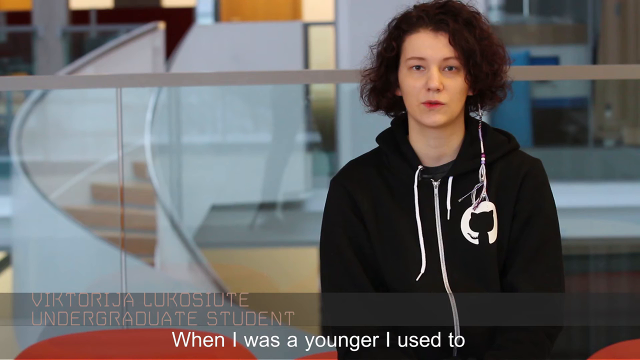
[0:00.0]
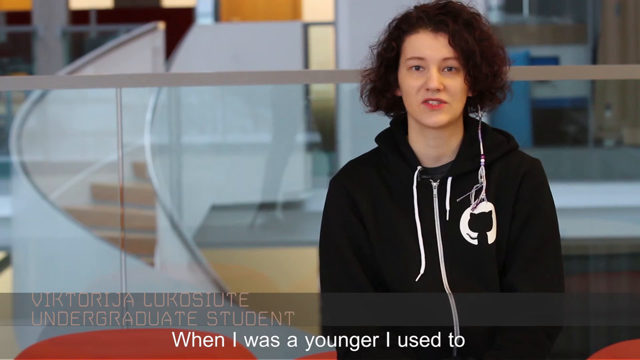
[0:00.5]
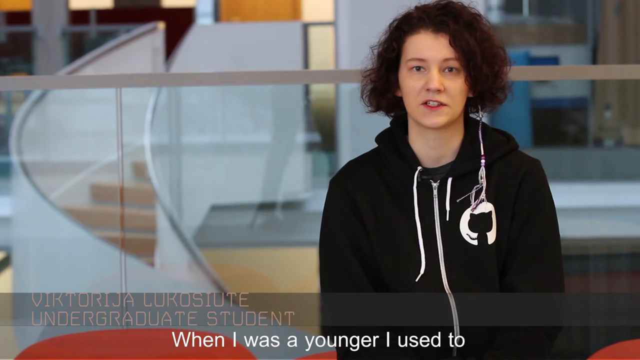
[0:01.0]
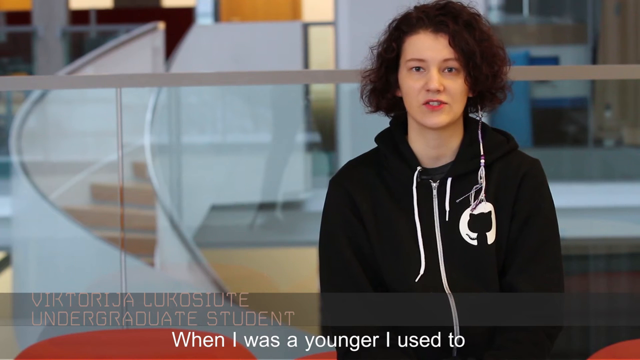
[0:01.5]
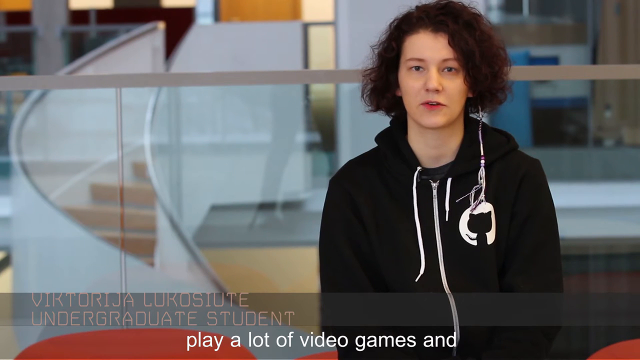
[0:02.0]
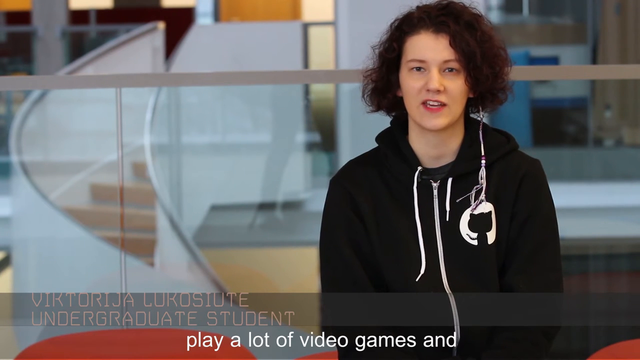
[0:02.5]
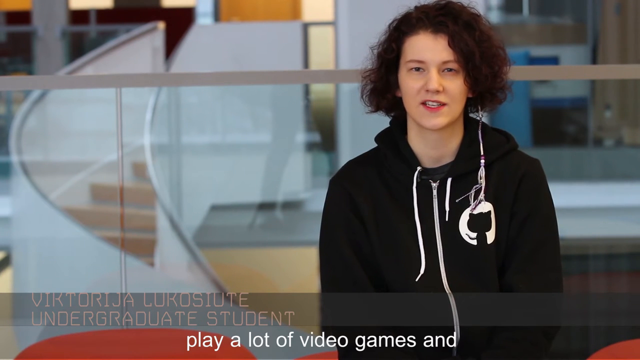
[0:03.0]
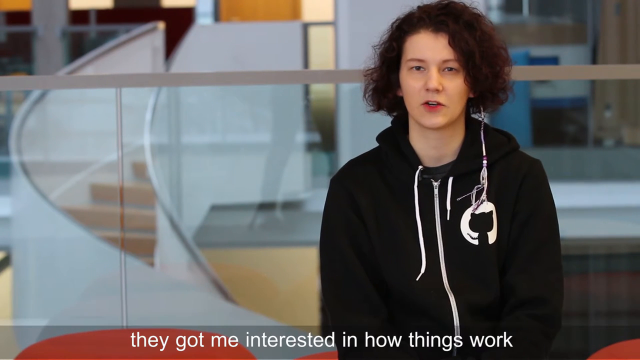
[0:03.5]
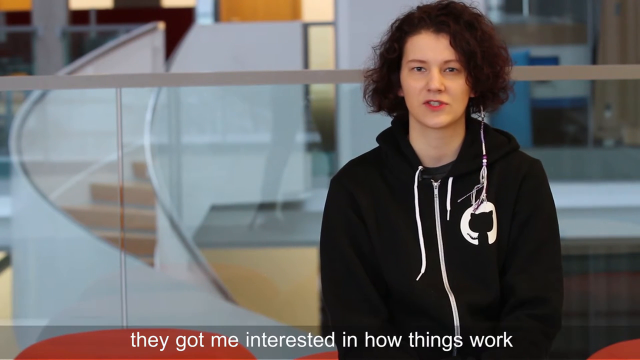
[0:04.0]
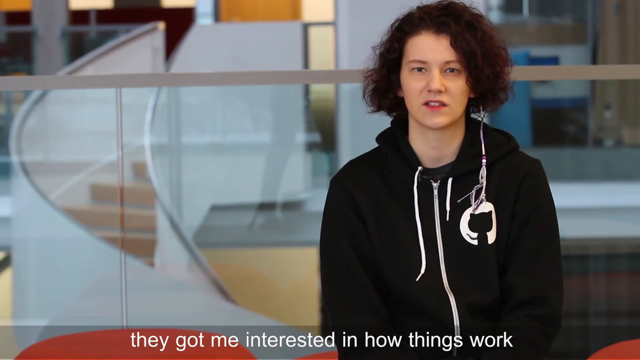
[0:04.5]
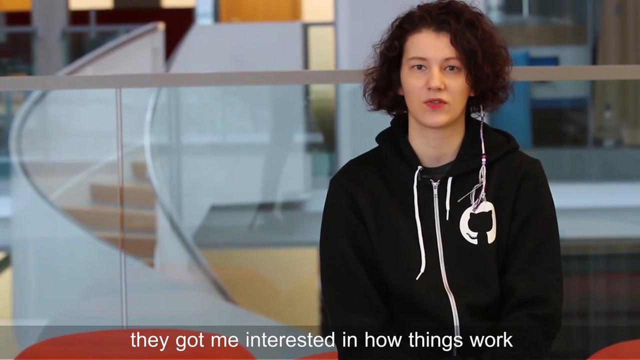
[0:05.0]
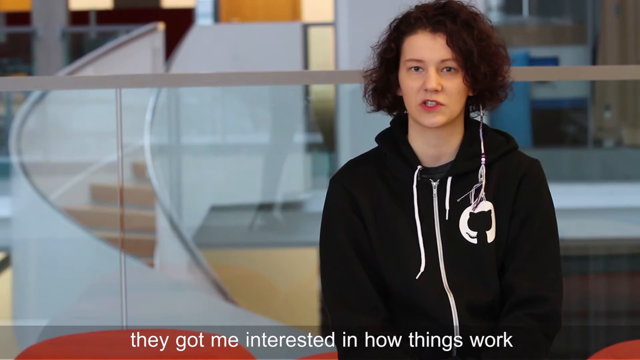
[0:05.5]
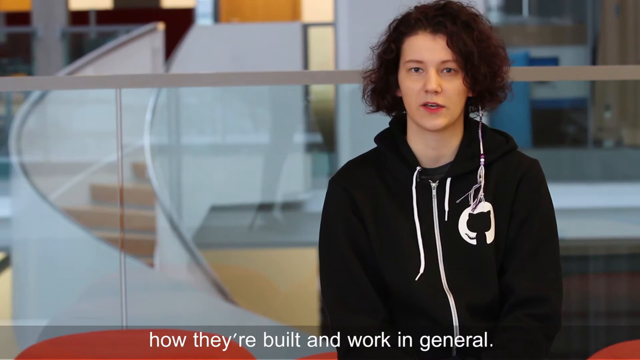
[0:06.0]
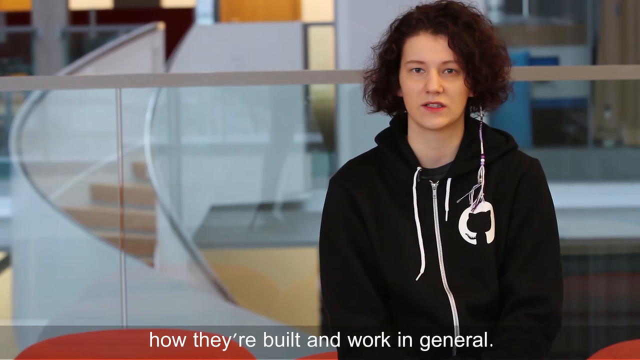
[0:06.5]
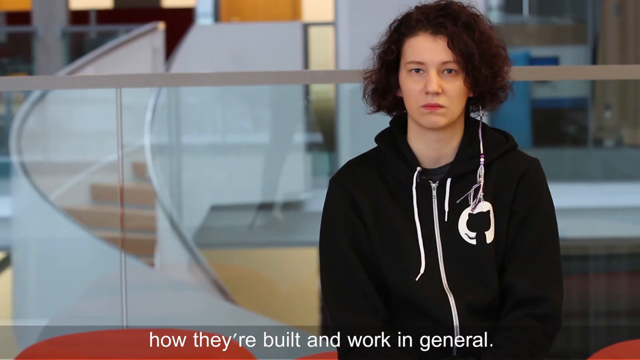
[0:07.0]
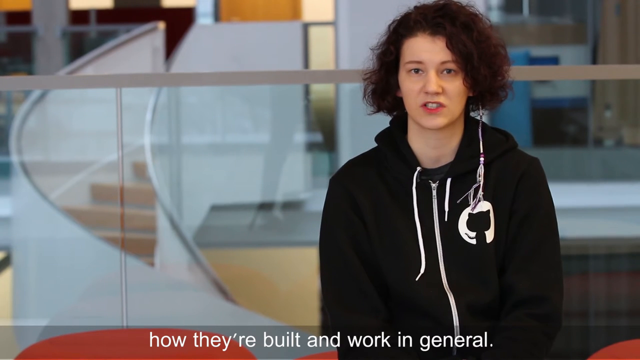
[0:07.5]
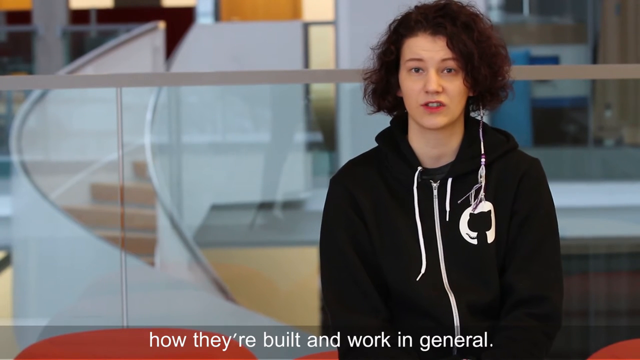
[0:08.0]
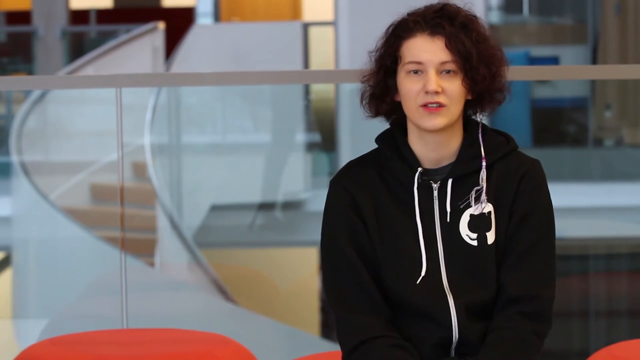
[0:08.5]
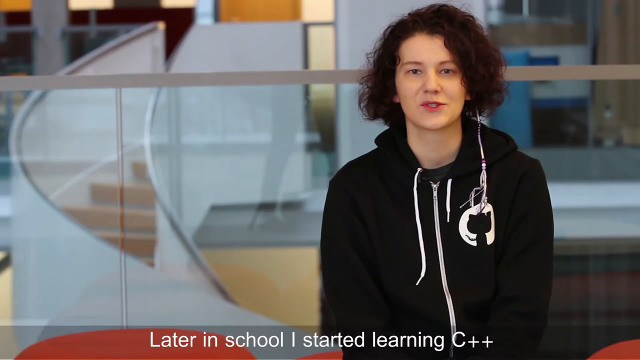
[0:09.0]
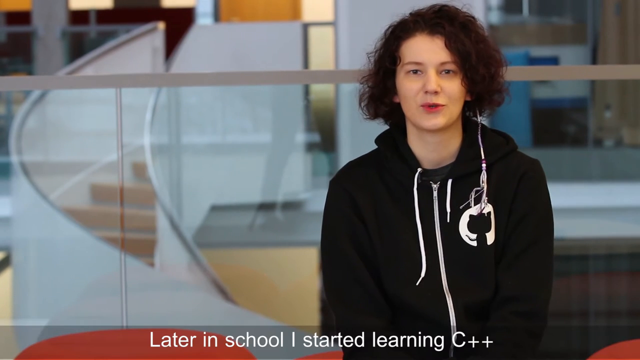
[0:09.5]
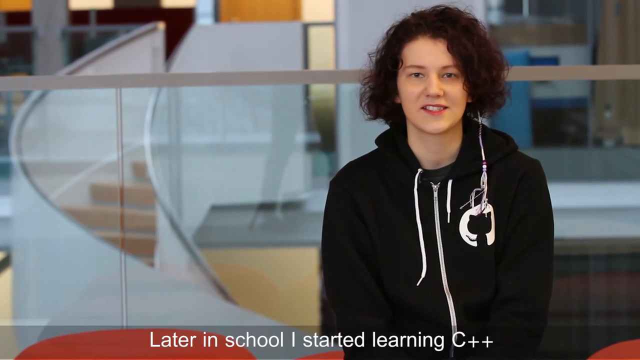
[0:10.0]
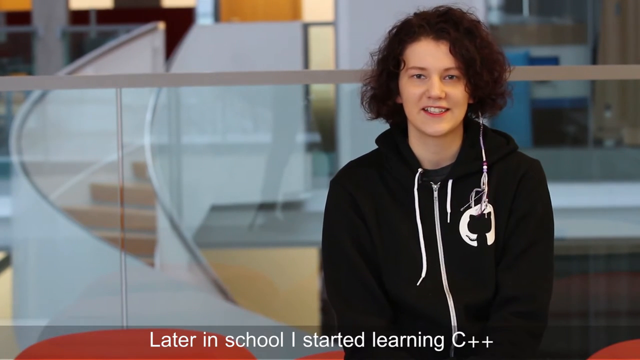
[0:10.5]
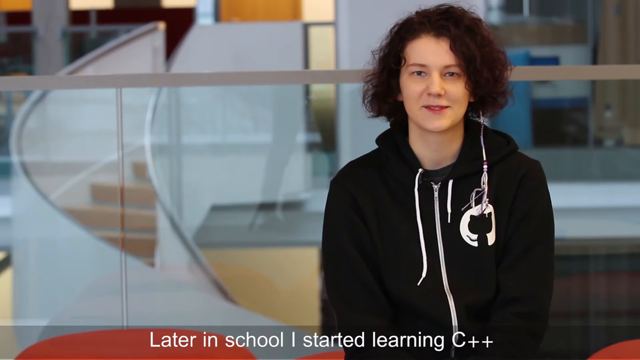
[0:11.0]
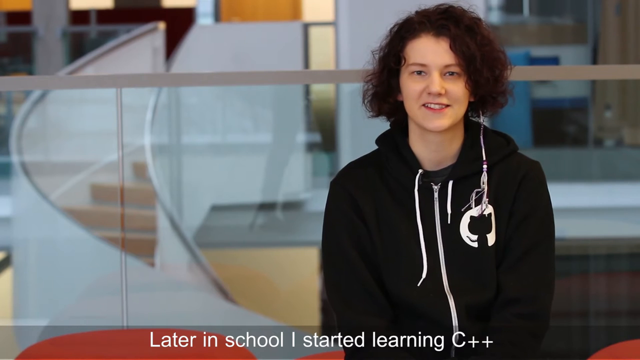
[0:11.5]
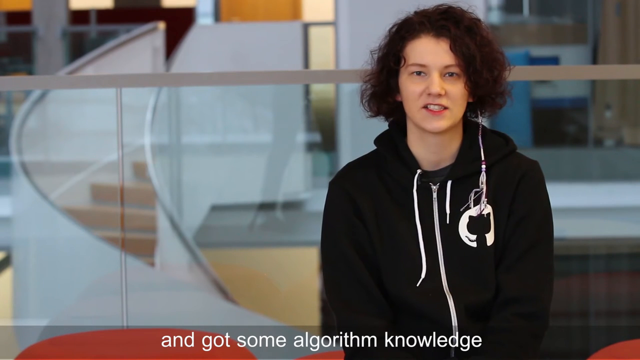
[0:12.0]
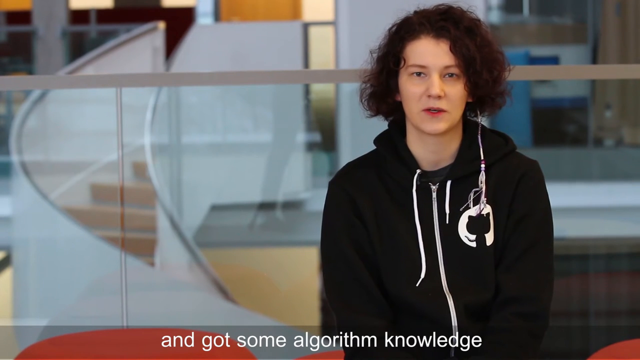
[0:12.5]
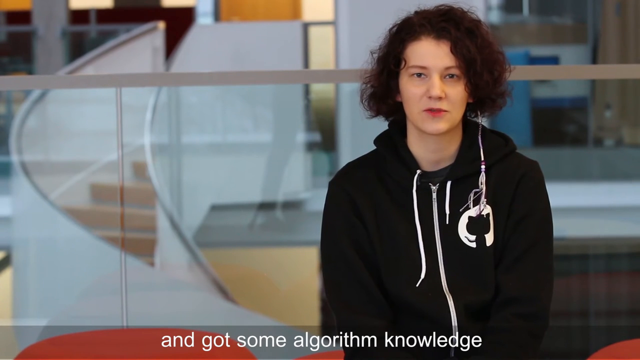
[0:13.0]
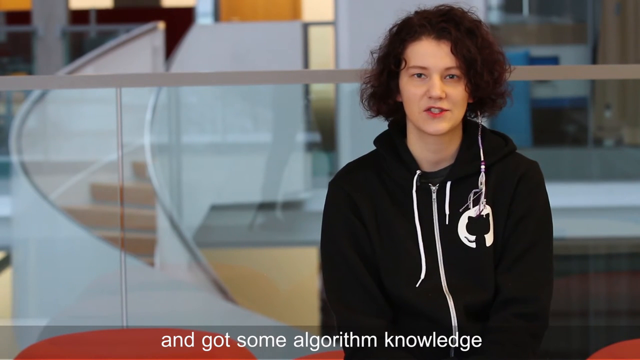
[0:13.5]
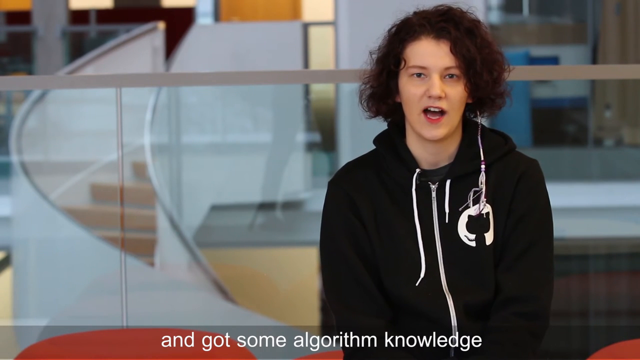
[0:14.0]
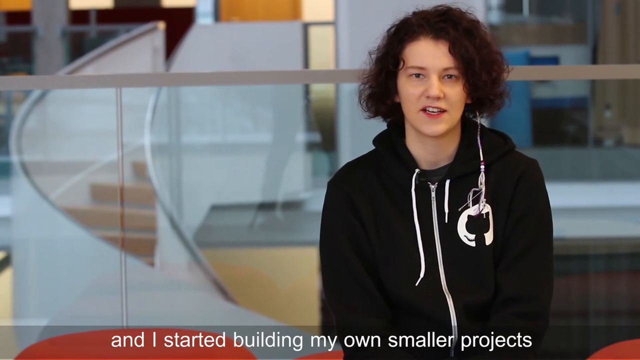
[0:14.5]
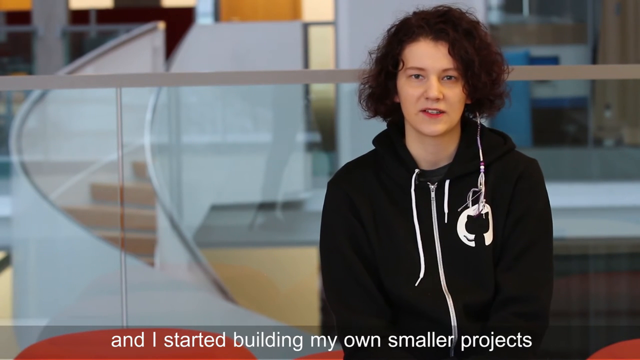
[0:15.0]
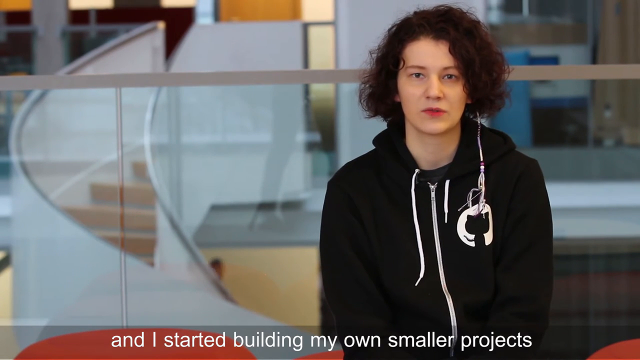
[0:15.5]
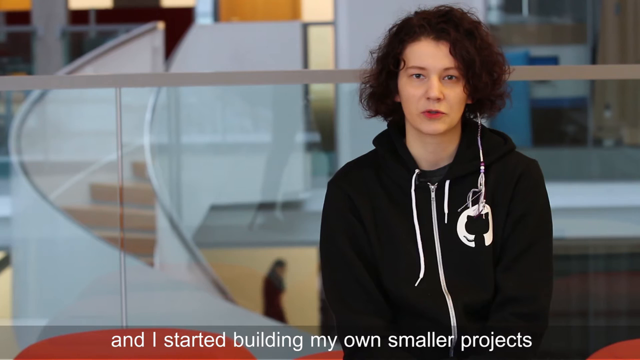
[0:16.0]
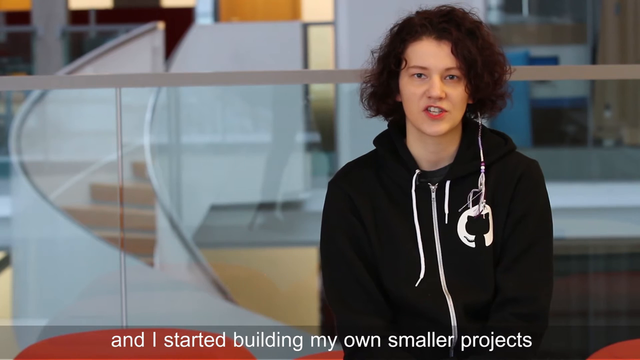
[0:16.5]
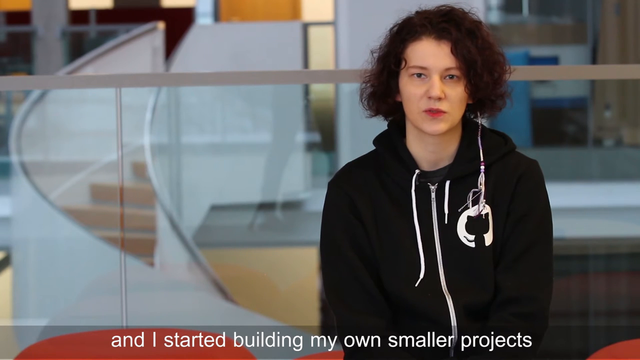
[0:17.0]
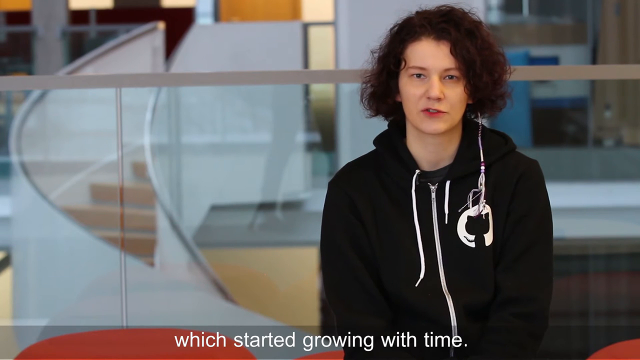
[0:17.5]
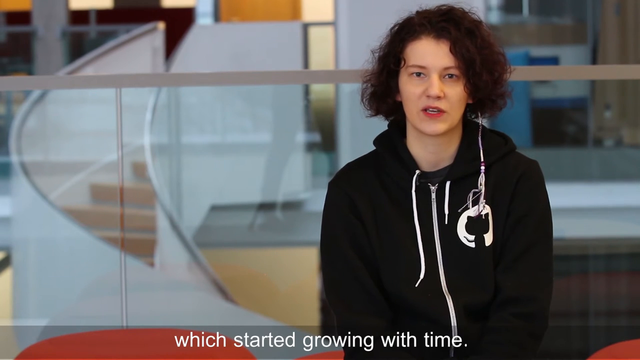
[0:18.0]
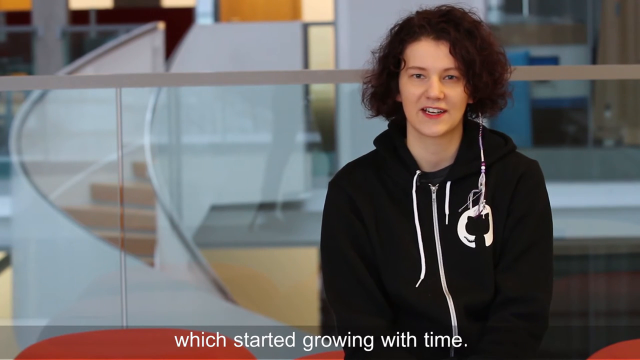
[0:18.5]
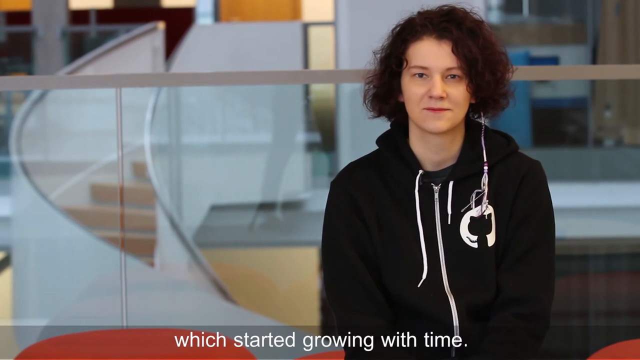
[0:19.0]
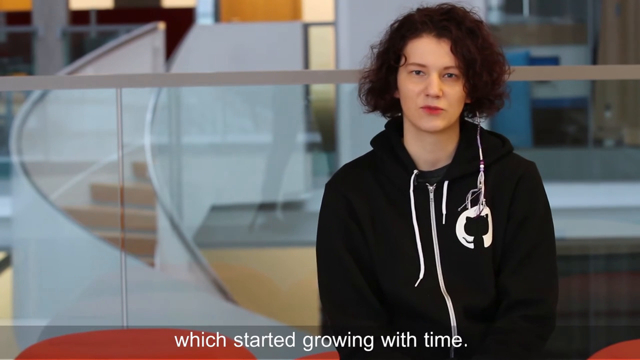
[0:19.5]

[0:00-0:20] A woman wears a black zip-up jacket with a kitty cat on it. She has short, wavy hair. Text at the bottom of the screen reads "Victoria Lucasute, undergraduate student." She appears to be talking, and she says, "When I was a younger, I used to play a lot of video games and they got me interested in how things work, how they're built, and work in general. I later in school started learning C++ and got some algorithm knowledge. And I started building my own smaller projects, which started growing with time. Usually," where the text ends. The background has some swirly stair steps, and it looks like a very modern, upscale building. She is pretty young, seemingly in her early or mid 20s.